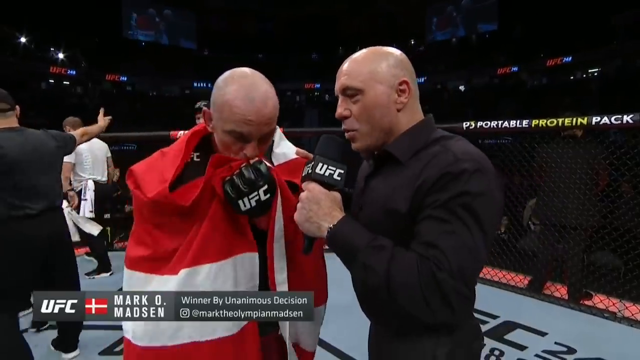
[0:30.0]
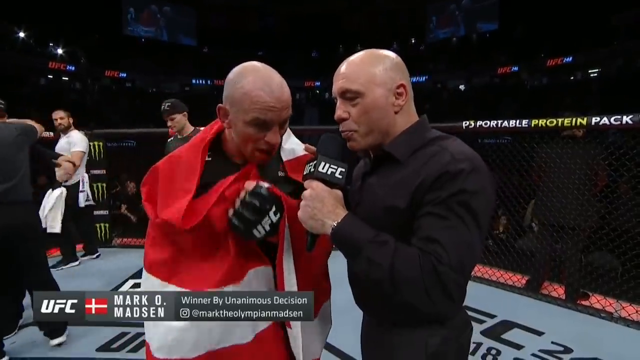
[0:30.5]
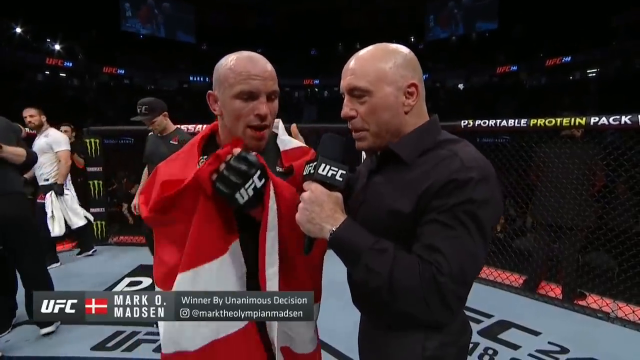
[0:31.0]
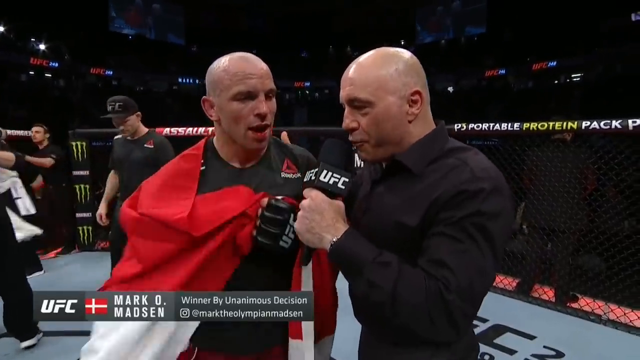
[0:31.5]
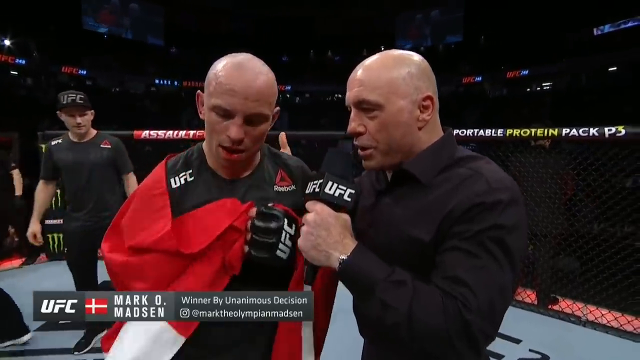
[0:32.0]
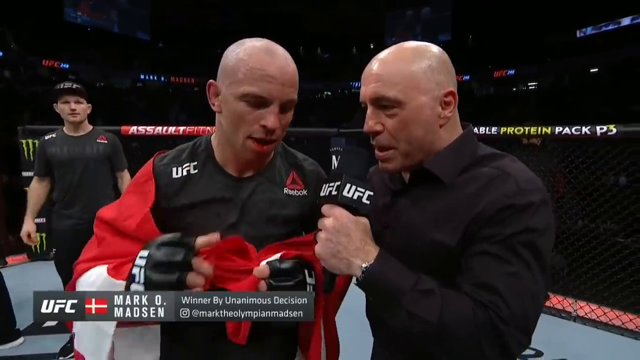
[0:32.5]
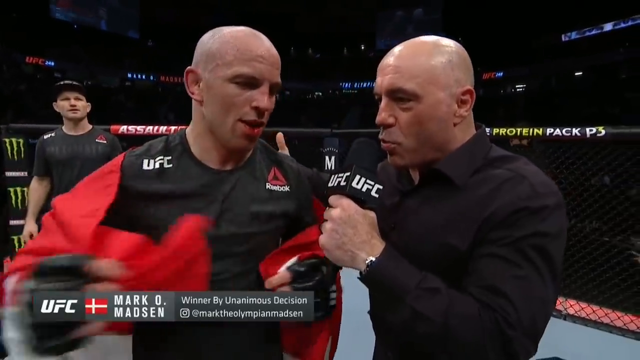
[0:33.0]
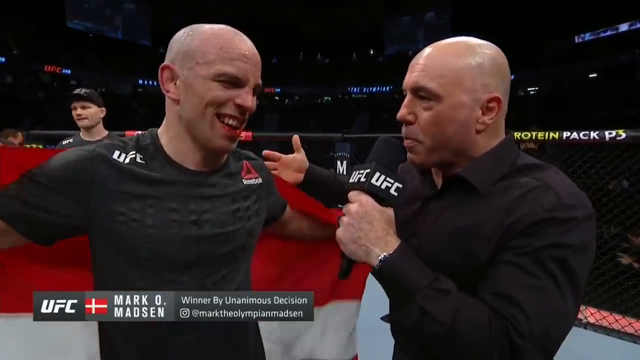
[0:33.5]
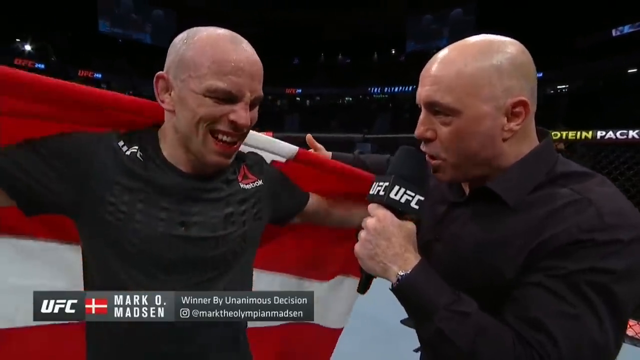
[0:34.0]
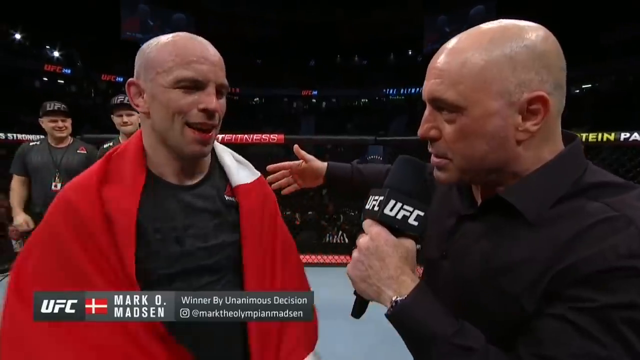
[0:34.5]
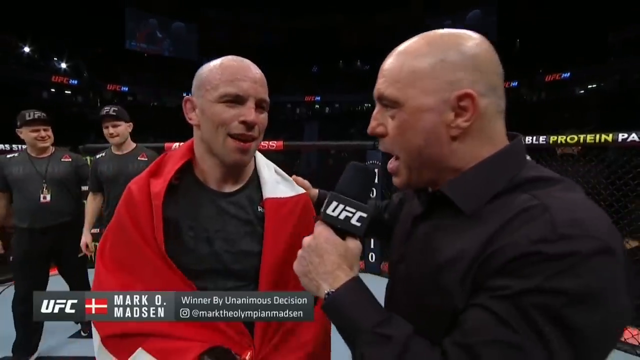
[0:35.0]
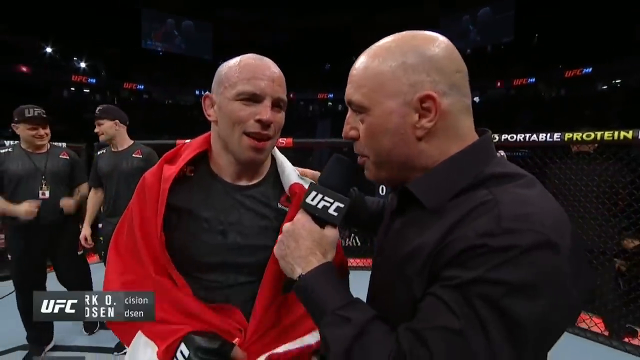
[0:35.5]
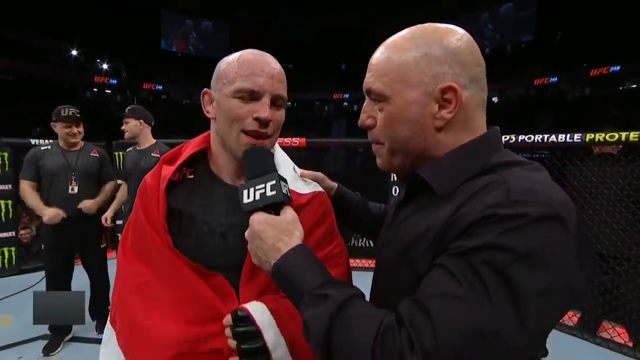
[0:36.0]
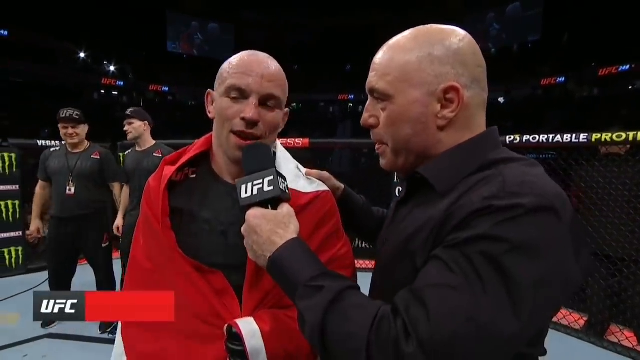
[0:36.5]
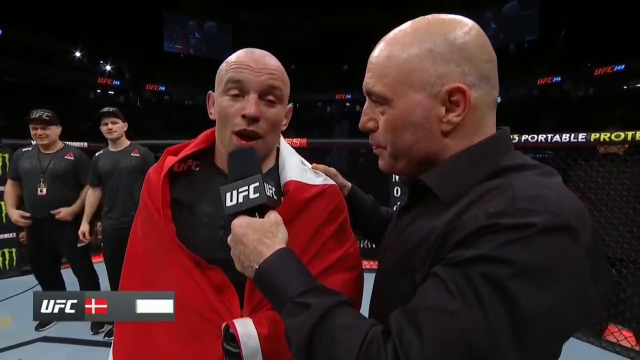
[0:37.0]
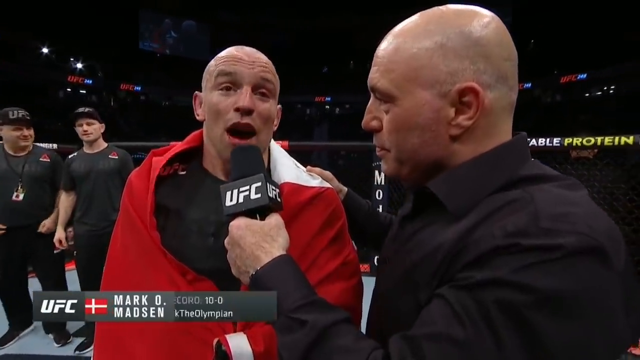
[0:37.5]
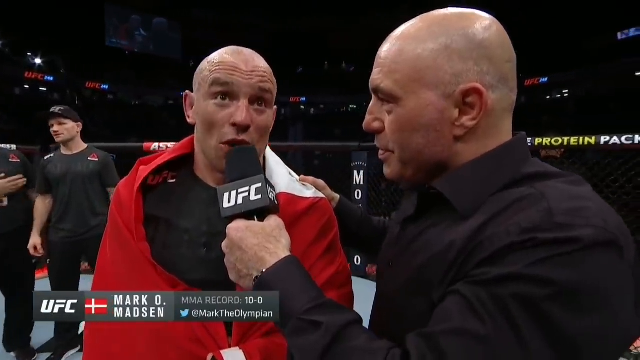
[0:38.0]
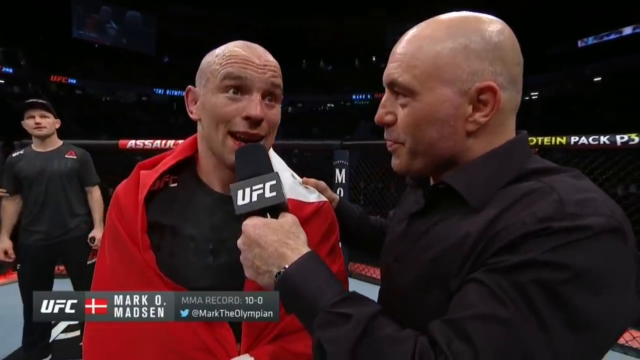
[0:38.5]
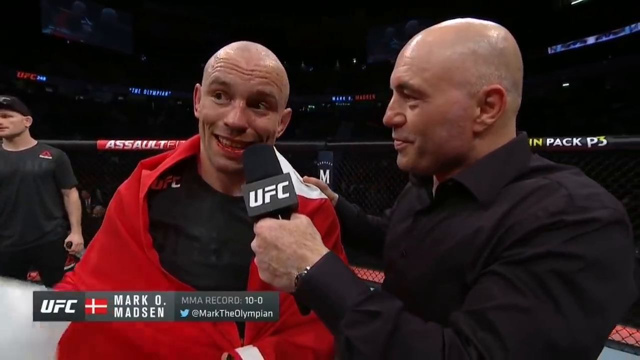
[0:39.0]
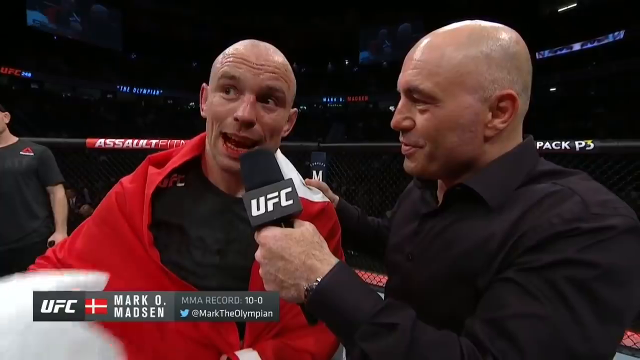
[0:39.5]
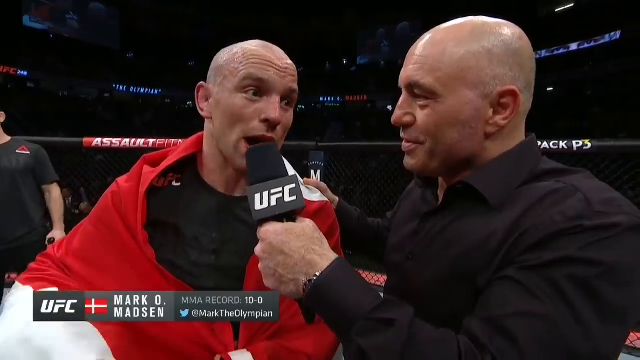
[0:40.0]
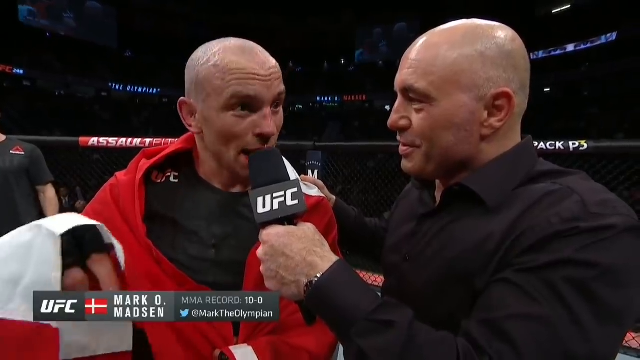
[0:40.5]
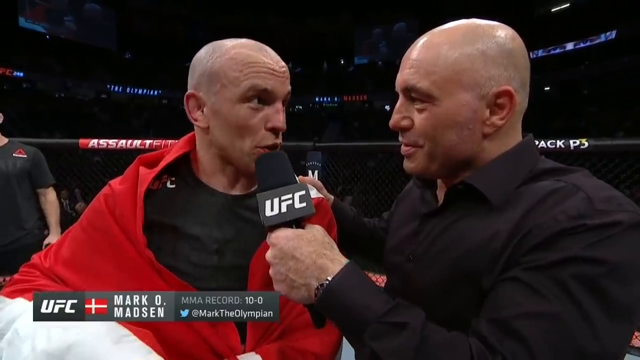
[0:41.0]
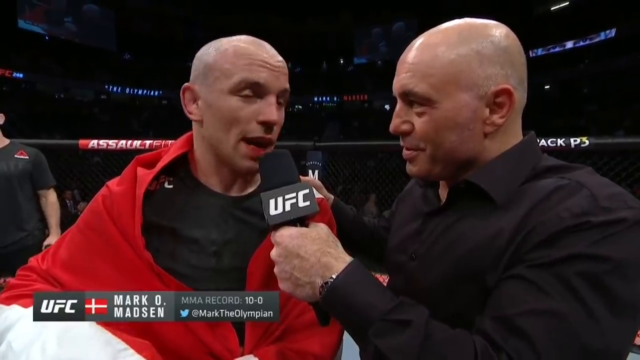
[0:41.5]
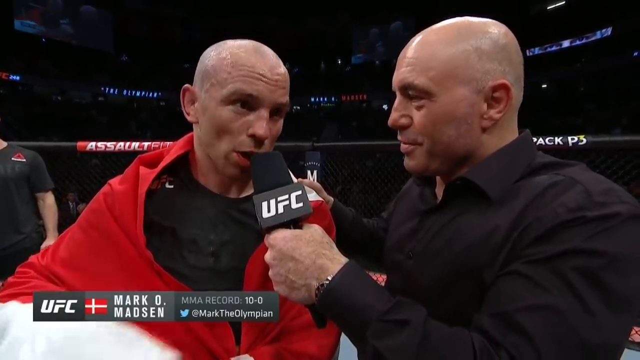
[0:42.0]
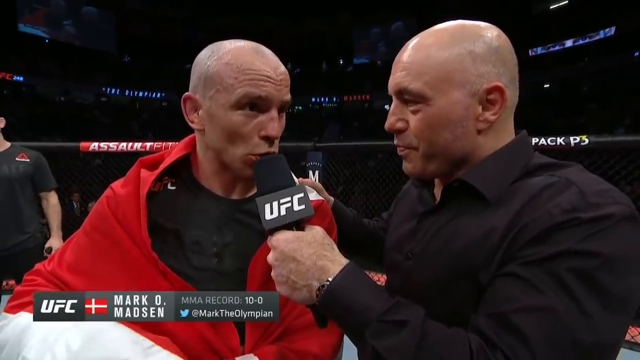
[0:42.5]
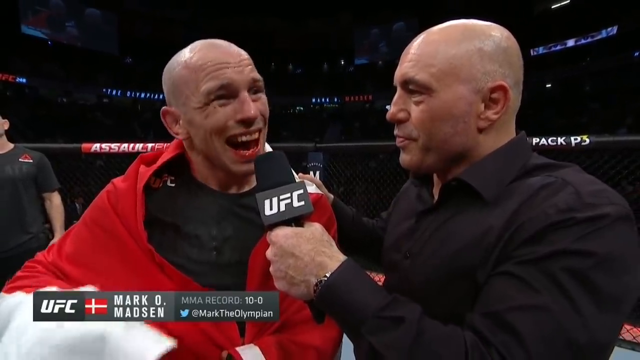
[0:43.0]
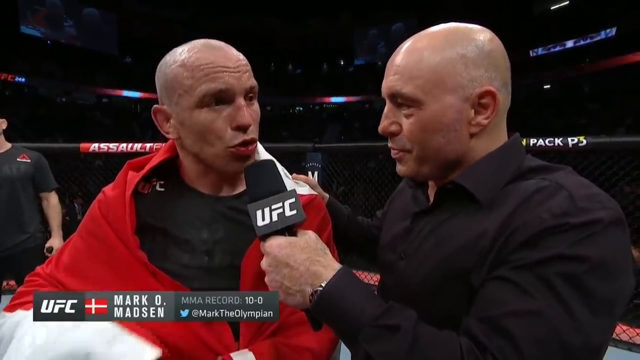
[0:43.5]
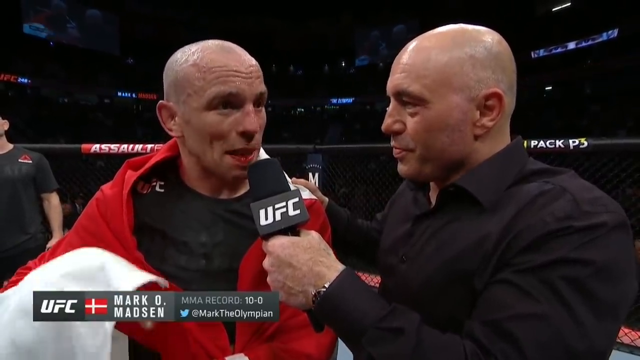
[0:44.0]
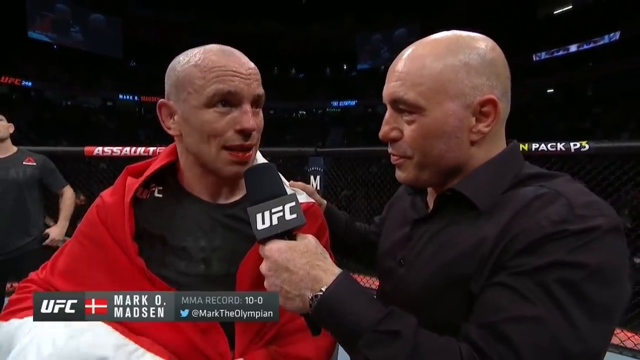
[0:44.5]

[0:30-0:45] Rogan and Madsen conduct an interview in the middle of the octagon, with a couple of people in the background. Madsen still has the flag draped around him and a smile on his face. He points down at the ground for emphasis. Rogan has his right hand on Madsen's left shoulder and holds the microphone, which also says "UFC", in his left hand. Madsen answers with passion, using his hands a lot, with a kind of semi-smile on his face the whole time. Rogan has a kind of smirk and looks pleased to be doing the interview, his right hand still on Madsen's left shoulder. Little is visible in the background other than either a referee or a corner man in the corner and the back of the octagon.